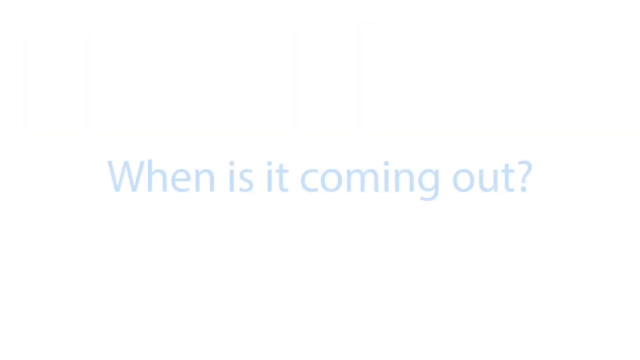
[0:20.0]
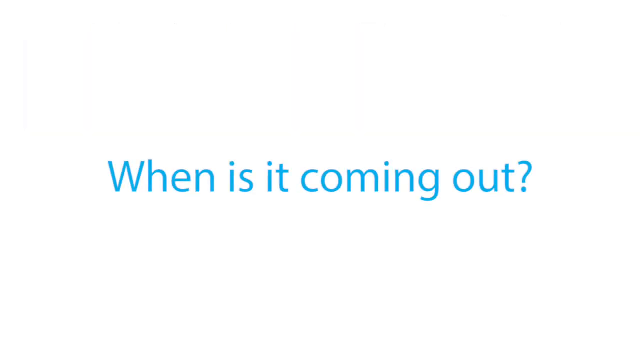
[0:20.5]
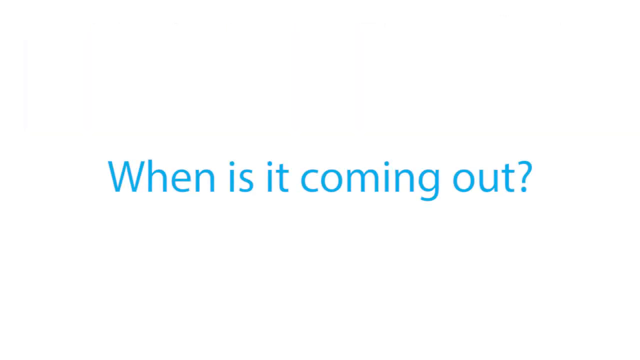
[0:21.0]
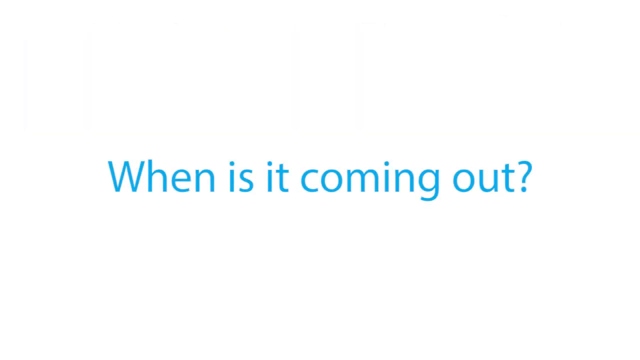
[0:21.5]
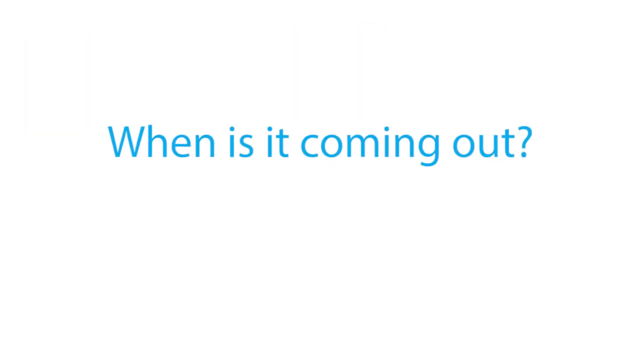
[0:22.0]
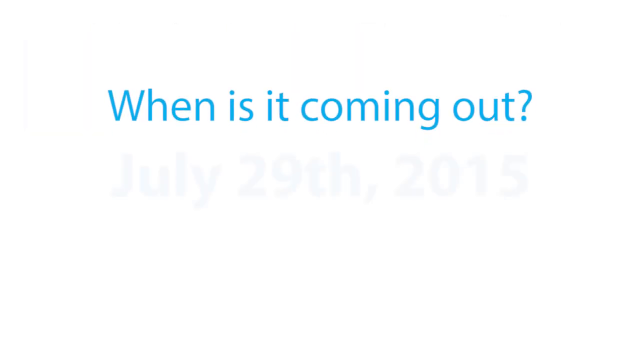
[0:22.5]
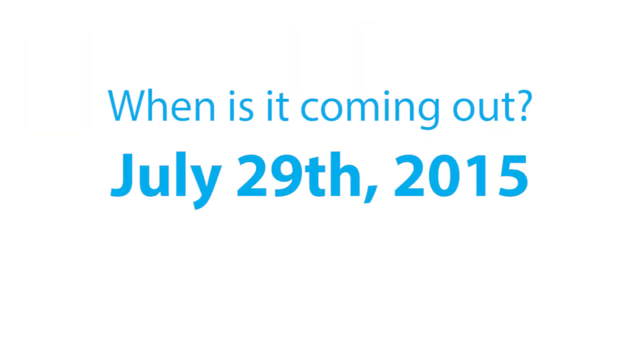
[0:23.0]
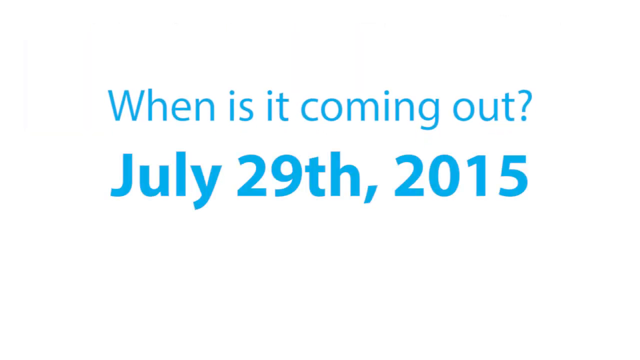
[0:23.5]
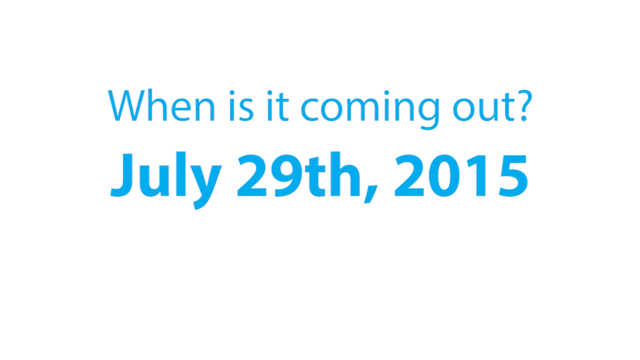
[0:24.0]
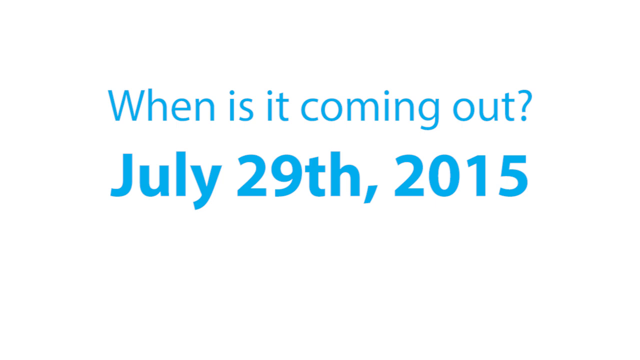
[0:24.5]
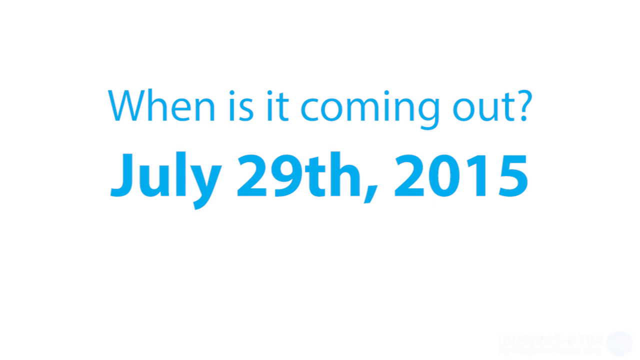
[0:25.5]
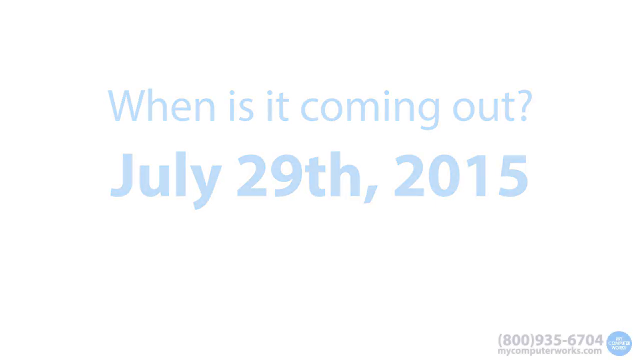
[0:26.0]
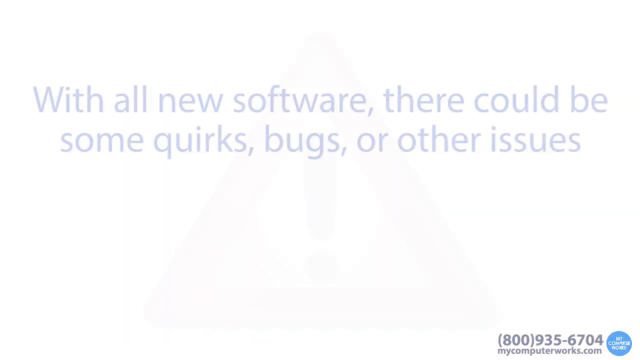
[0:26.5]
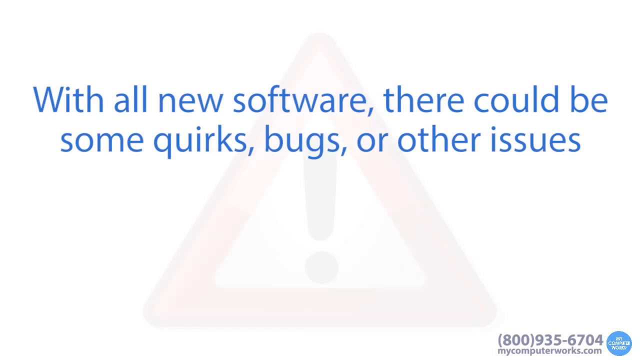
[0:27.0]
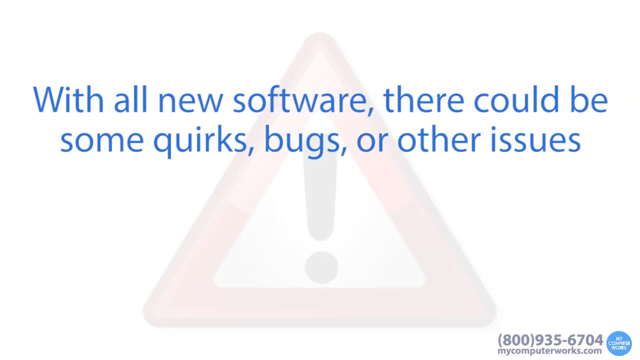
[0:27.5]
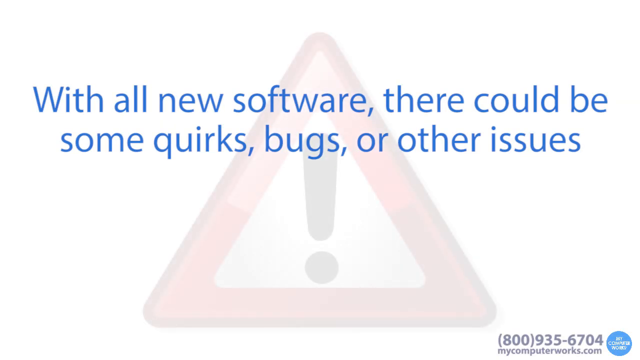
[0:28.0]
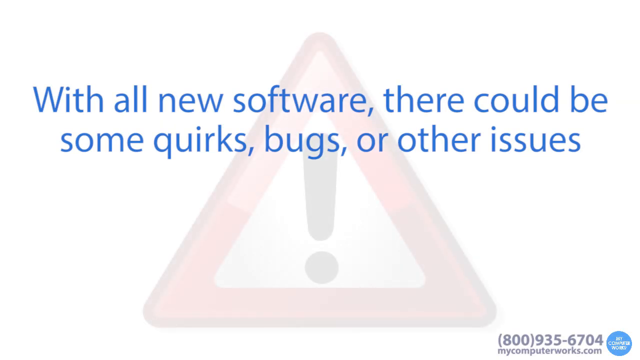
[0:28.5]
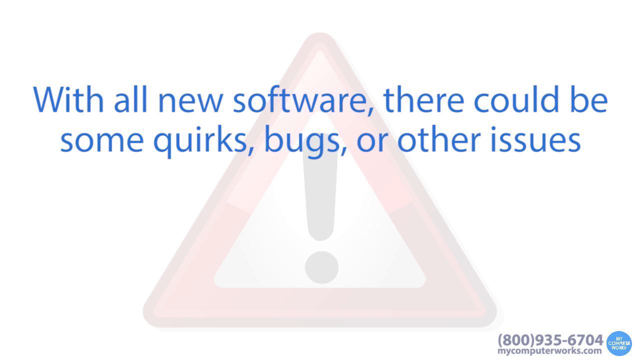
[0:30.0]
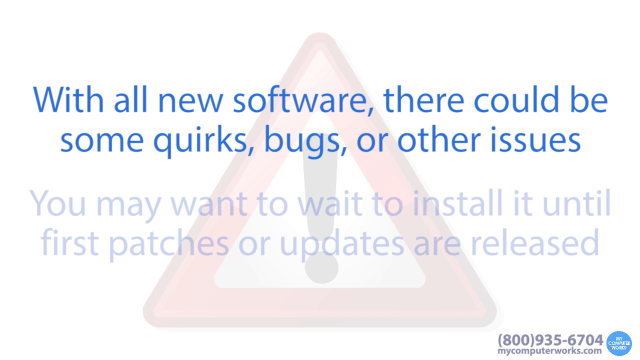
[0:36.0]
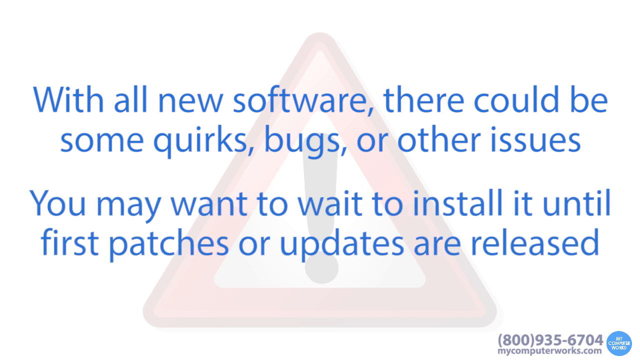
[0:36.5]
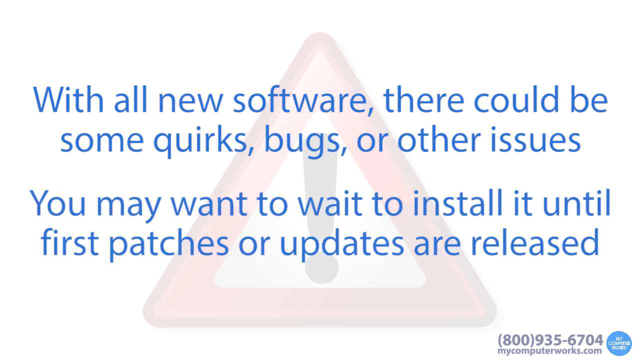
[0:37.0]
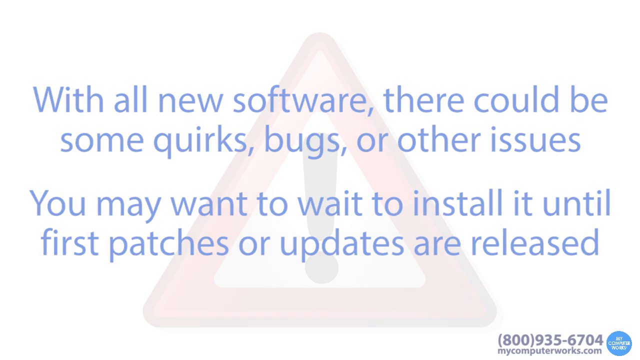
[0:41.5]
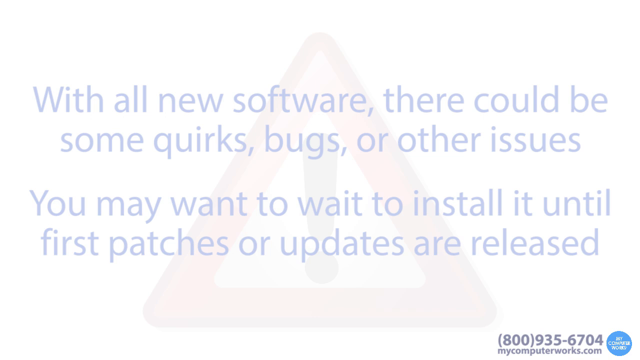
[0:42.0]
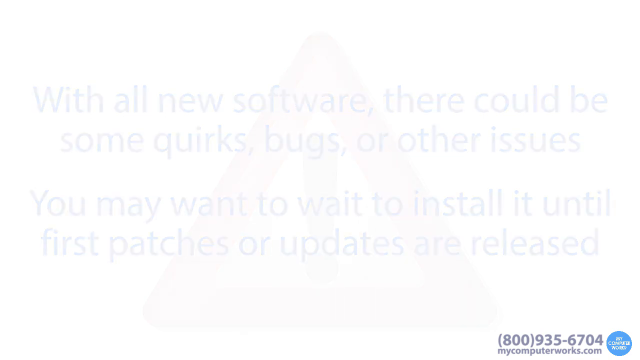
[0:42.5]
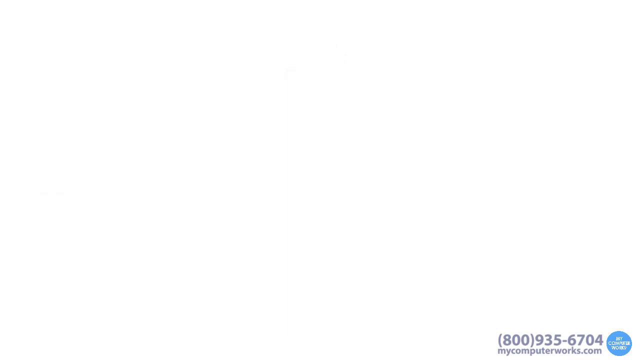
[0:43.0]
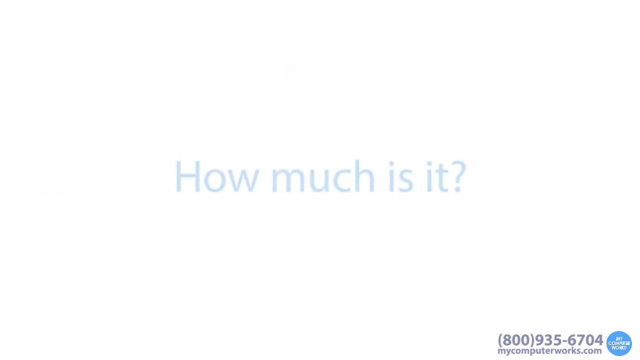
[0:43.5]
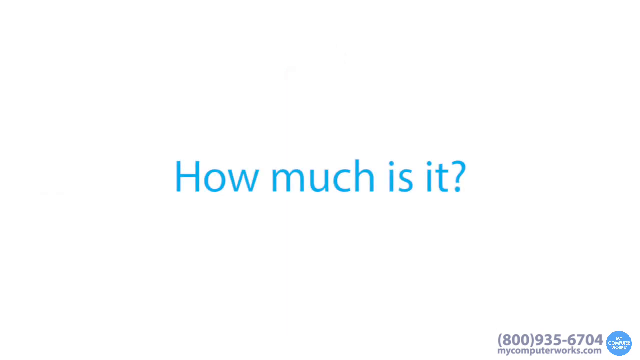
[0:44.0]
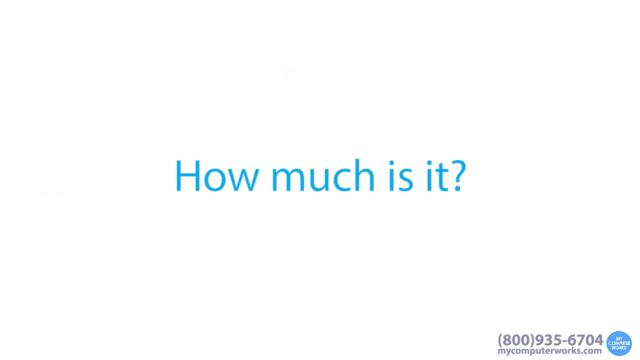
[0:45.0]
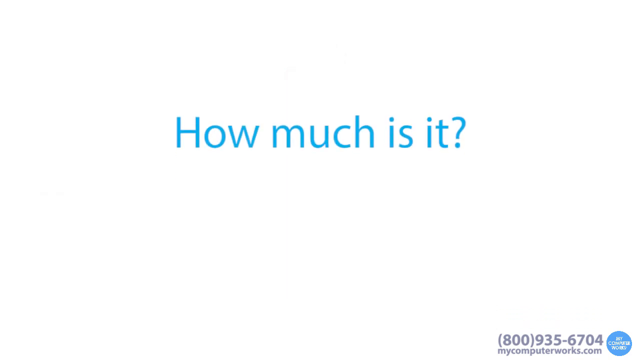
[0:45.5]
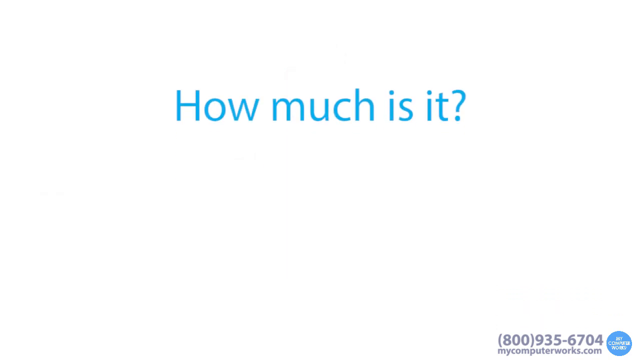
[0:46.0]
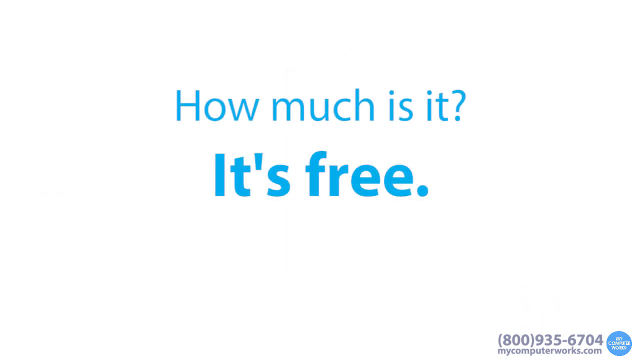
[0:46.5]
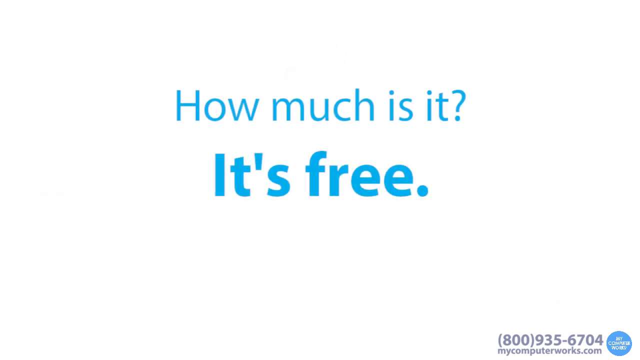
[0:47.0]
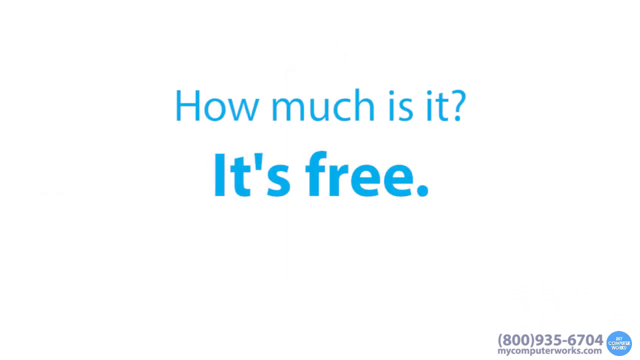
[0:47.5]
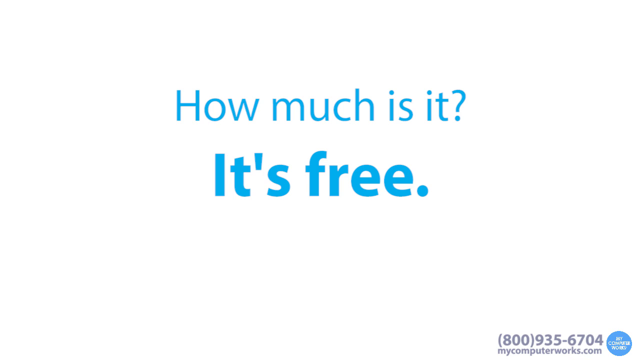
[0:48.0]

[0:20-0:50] A plain white screen with a gradation to black at the bottom is shown. Blue writing fades in at the centre of the screen: "When is it coming out?" The writing moves up slightly and stops, and a new line fades in where it had been: "July 29th, 2015". This text fades out to white. New blue text fades in: "With all new software, there could be some quirks, bugs or other issues". In the background, occupying a large section of the screen, a red traffic warning triangle fades in with a black exclamation mark in its white centre. In the bottom right-hand corner are a telephone number, (800) 935 6704, and underneath it the web address mycomputerworks.com, with a blue circle to its right containing "my computer works" in white. Underneath the blue writing a new sentence appears in blue: "You may want to wait to install it until first patches or updates are released". The two blue sentences and the red warning sign fade out to white. New blue text fades in in the middle: "How much is it?" It moves up and stops, and in the space it vacated new blue text fades in: "It's free."